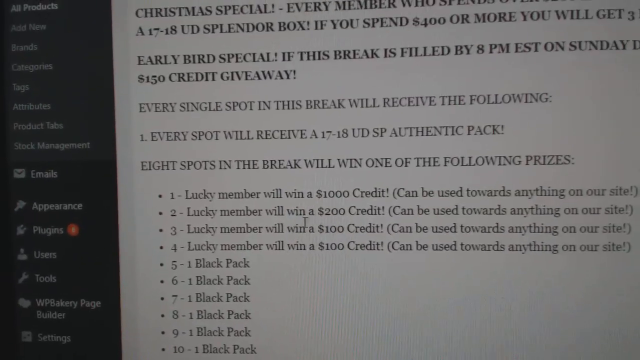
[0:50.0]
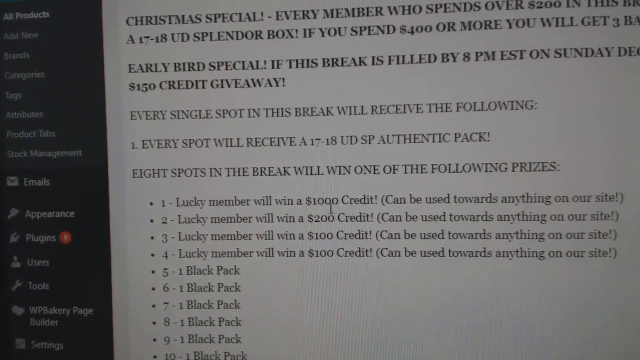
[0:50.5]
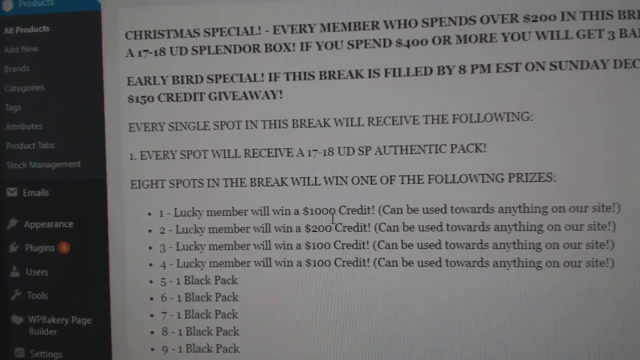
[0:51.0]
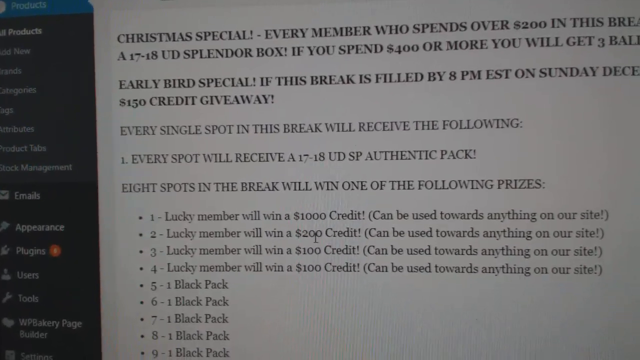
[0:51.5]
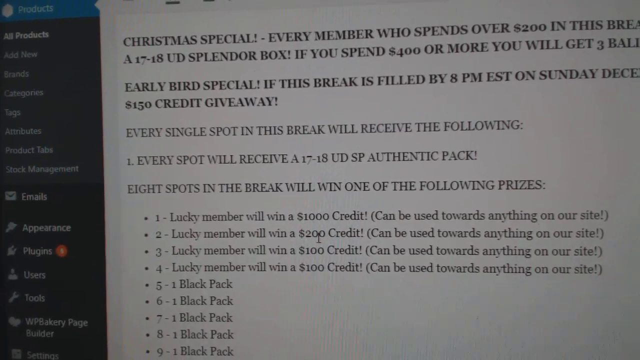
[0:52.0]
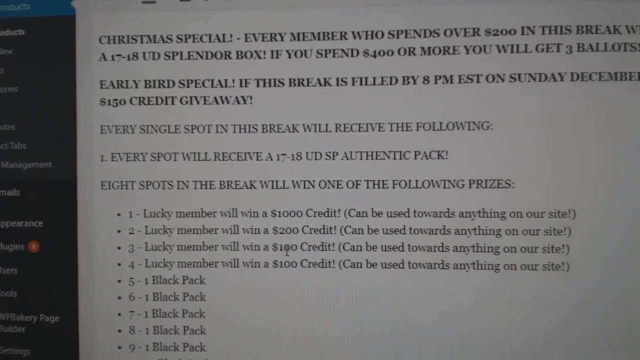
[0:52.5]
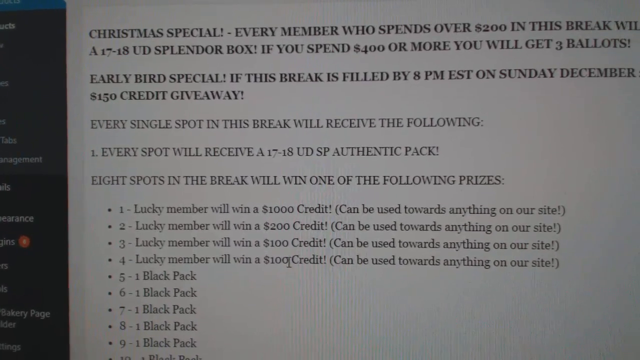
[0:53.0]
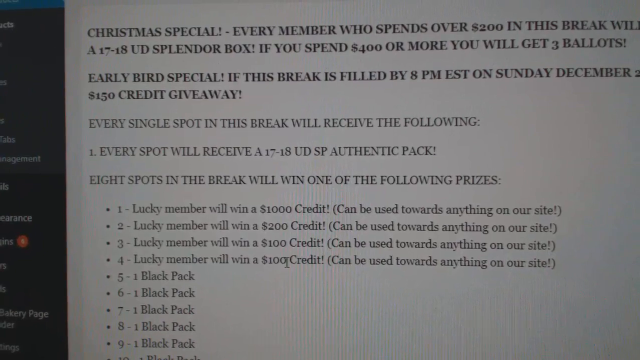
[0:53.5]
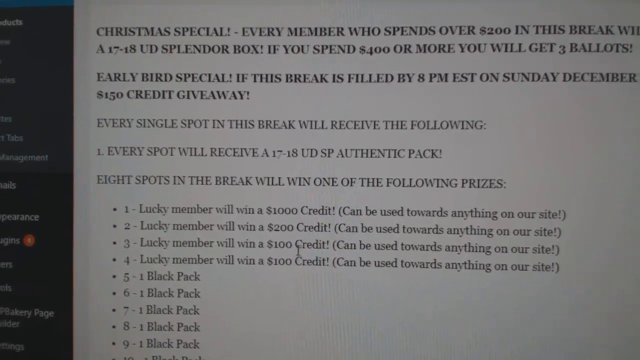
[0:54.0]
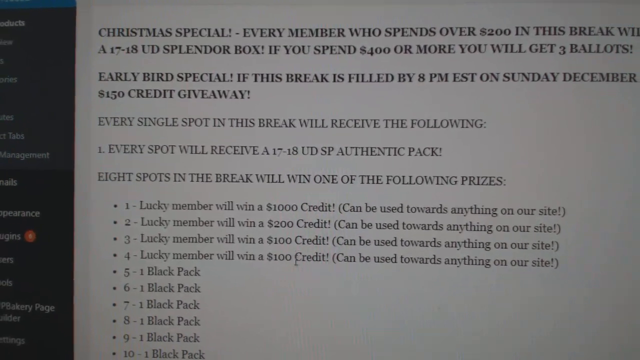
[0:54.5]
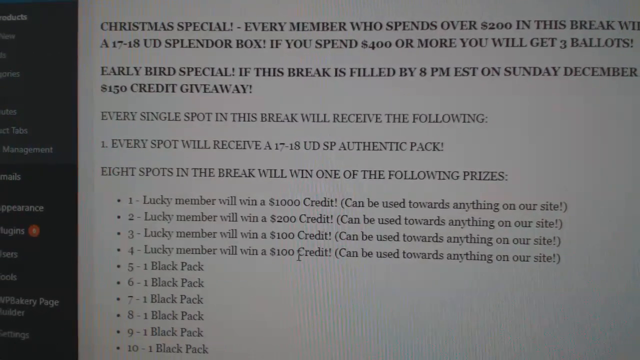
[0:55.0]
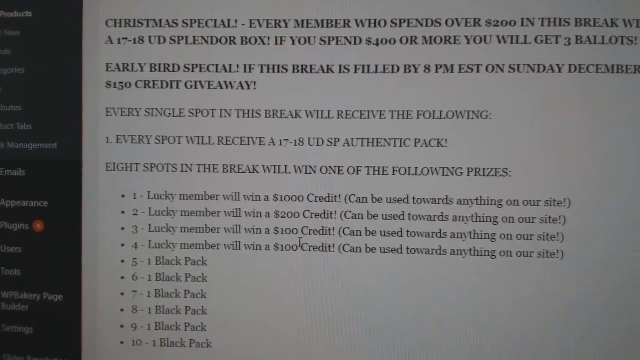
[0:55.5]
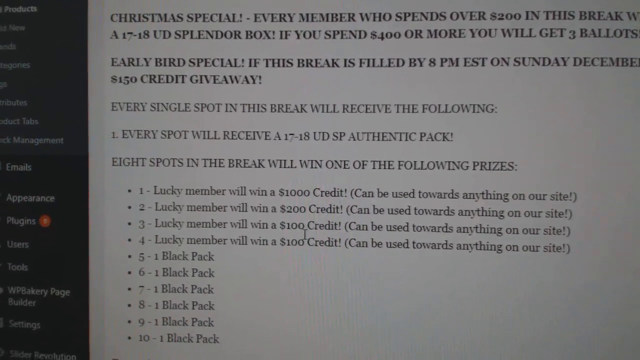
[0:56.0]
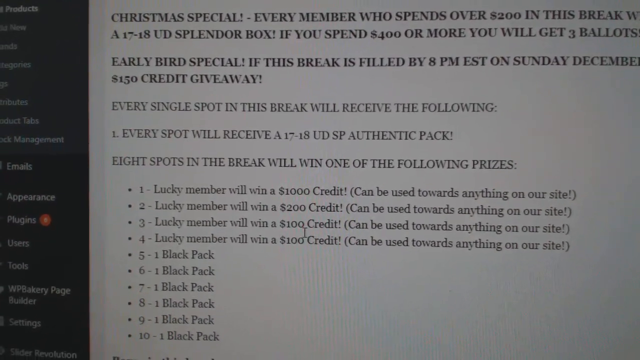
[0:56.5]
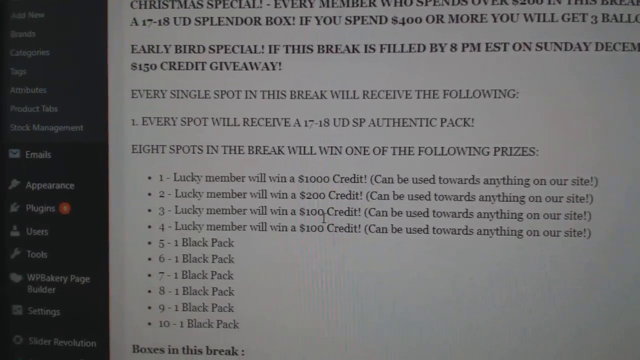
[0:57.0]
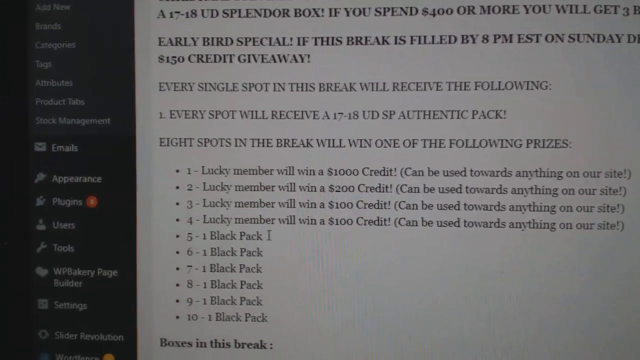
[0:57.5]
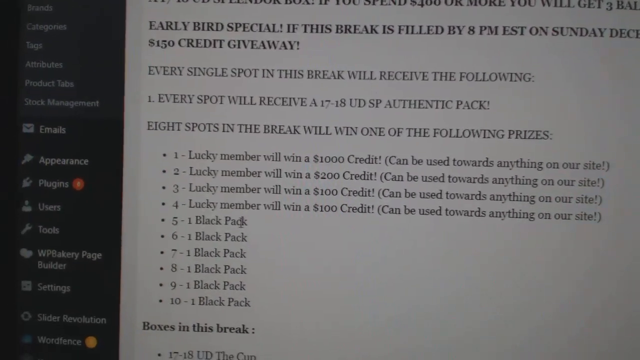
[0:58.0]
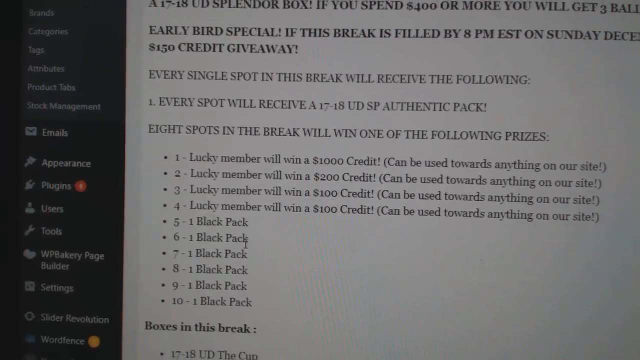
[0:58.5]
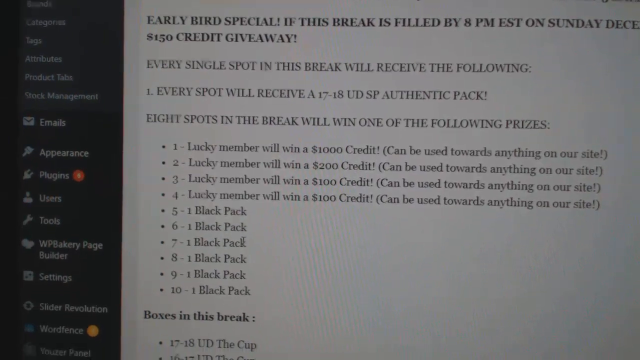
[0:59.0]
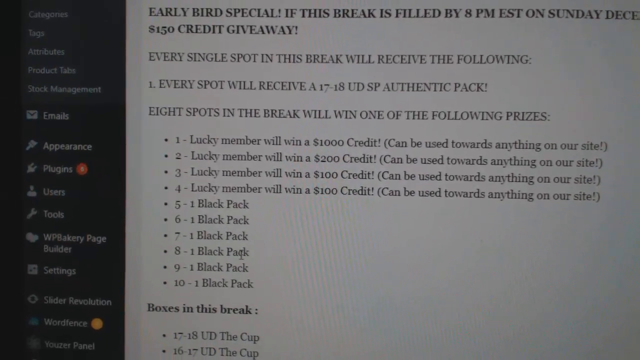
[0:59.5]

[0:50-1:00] Extremely grainy, blurry footage, seemingly filmed with a device pointed at a computer screen, shows a page full of text. It reads "Christmas special every member who spends over 200 in" before being cut off, followed by "17 to 18 UD splendor box" and "If you spend 400 or more you will get", which is also cut off. Further text reads "Early bird special if this break is filled by 8 p.m. Est on Sunday, December eight", "Every single spot in this break will receive the following", "every spot will receive a 17 to 18 UD SP authentic pack", and "eight spots in the break will win one of the following prizes", followed by hard-to-read explanations. The footage is very shaky. The mouse cursor keeps moving over the text as an I-shaped editing cursor, and the person apparently is writing the text on the page, though what it is about is unclear.